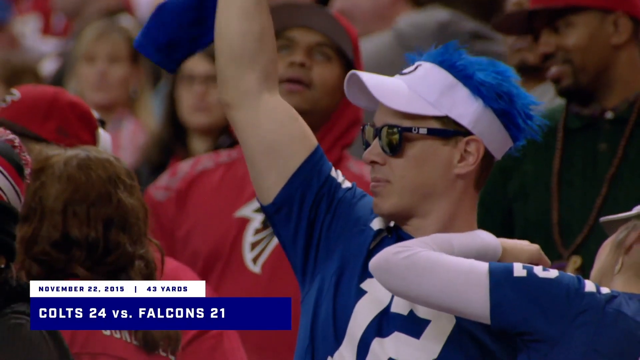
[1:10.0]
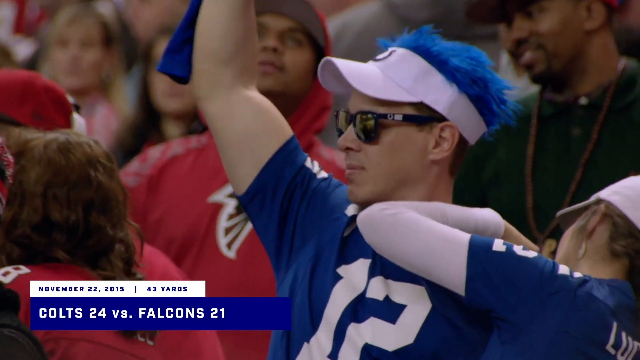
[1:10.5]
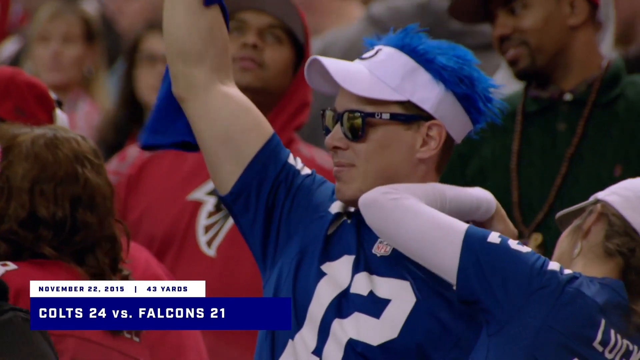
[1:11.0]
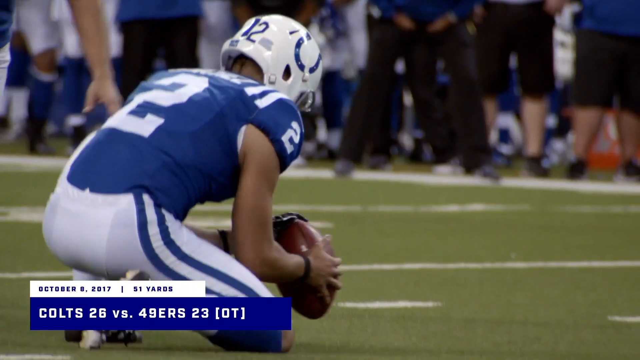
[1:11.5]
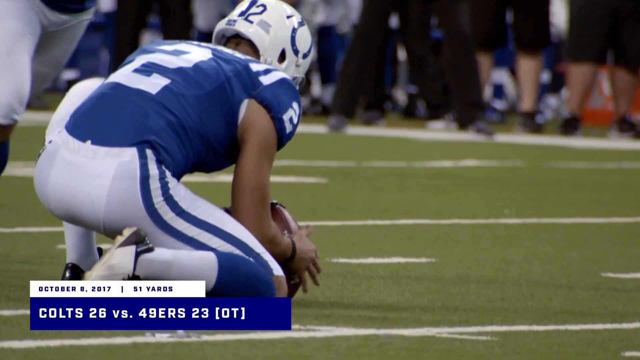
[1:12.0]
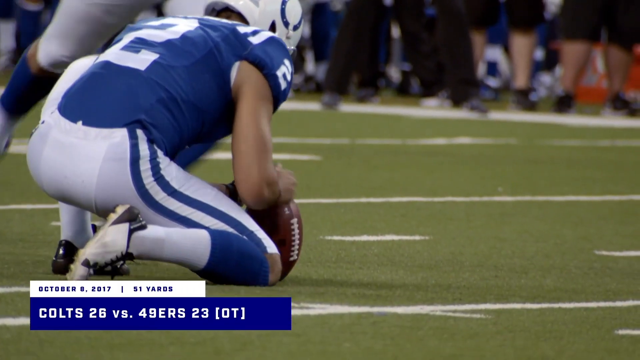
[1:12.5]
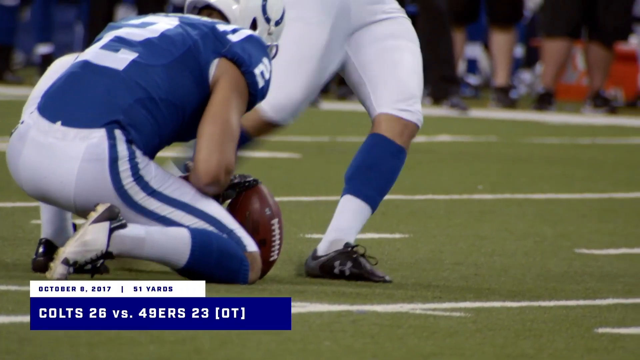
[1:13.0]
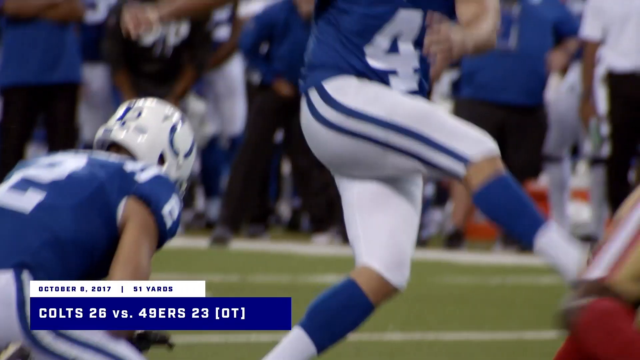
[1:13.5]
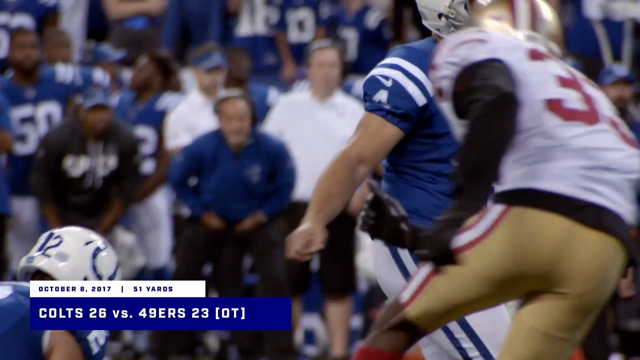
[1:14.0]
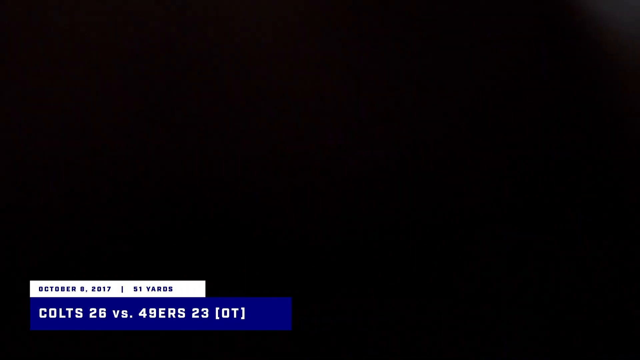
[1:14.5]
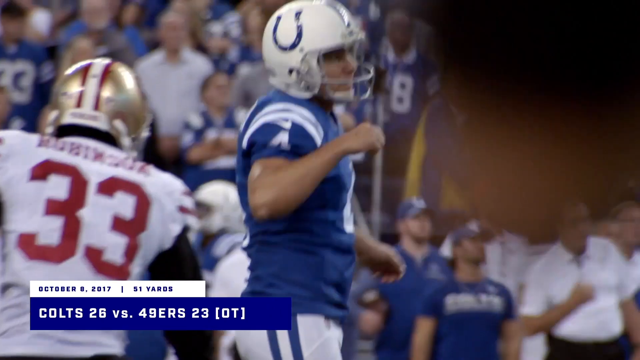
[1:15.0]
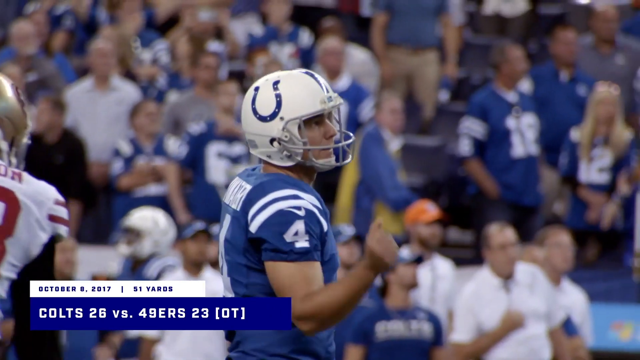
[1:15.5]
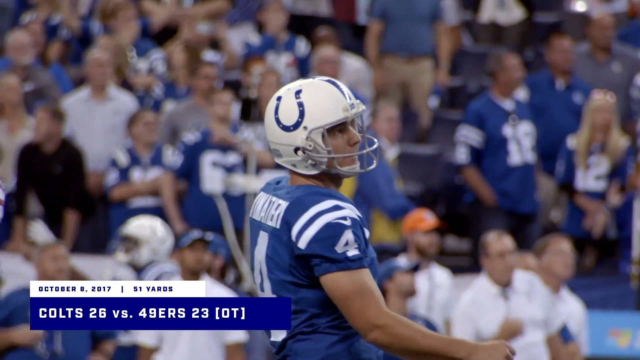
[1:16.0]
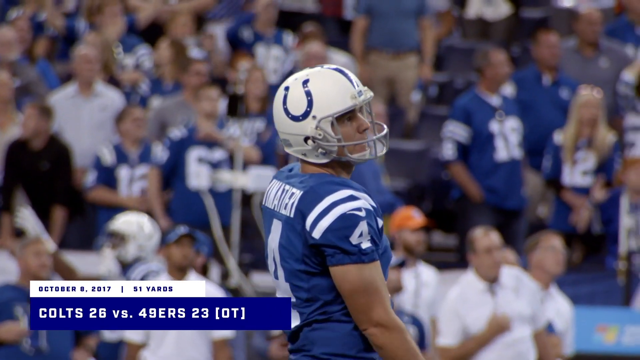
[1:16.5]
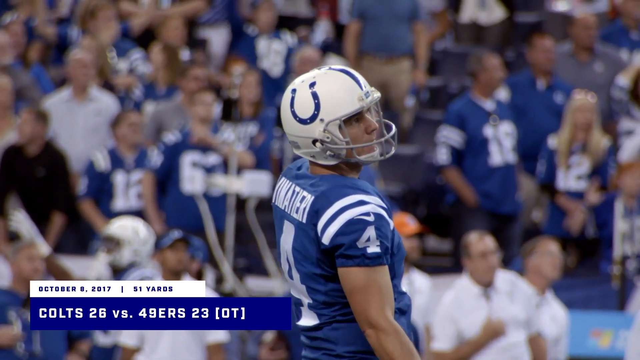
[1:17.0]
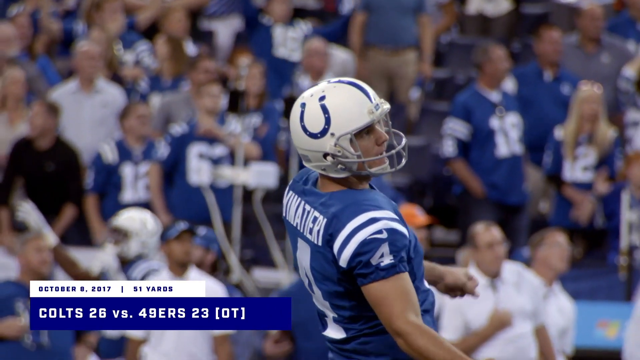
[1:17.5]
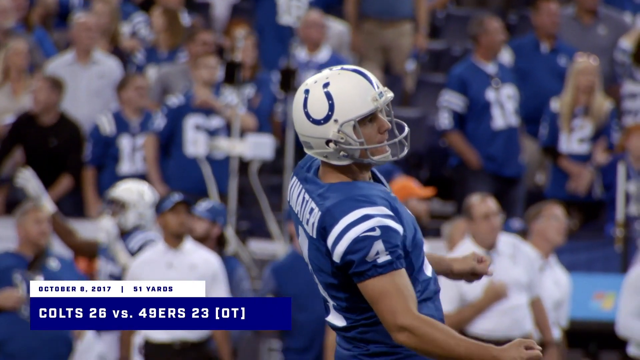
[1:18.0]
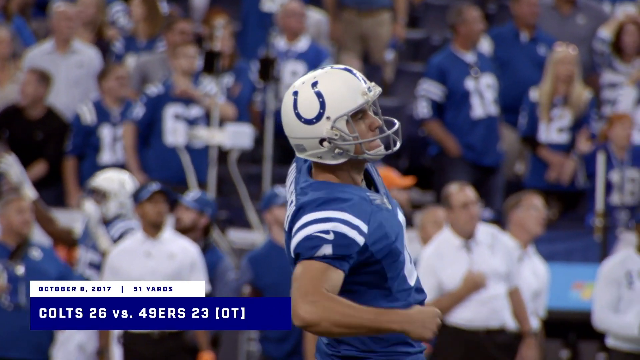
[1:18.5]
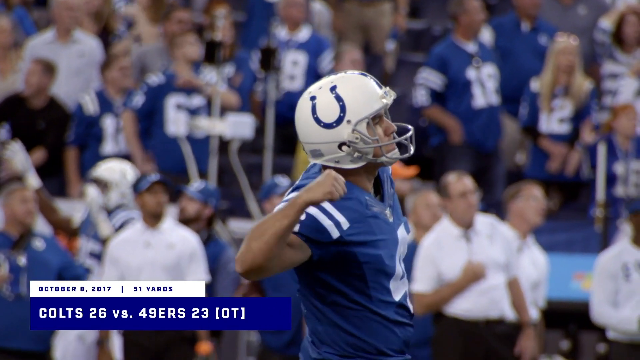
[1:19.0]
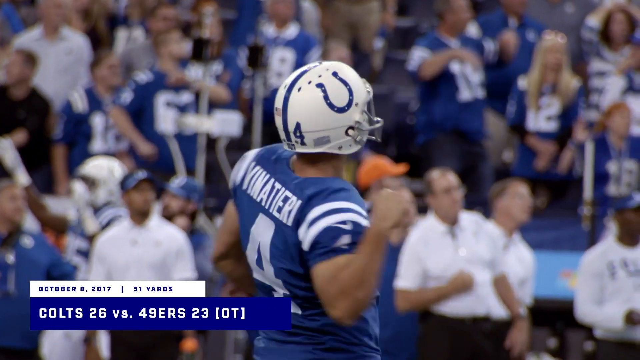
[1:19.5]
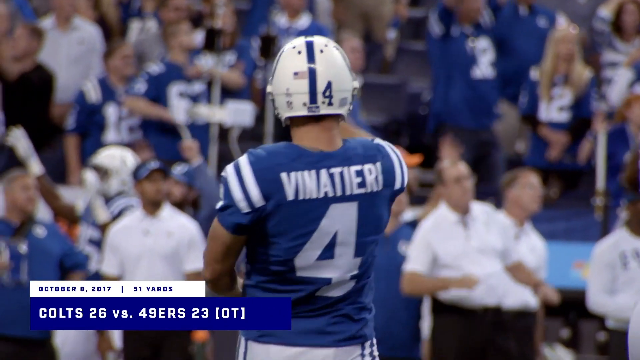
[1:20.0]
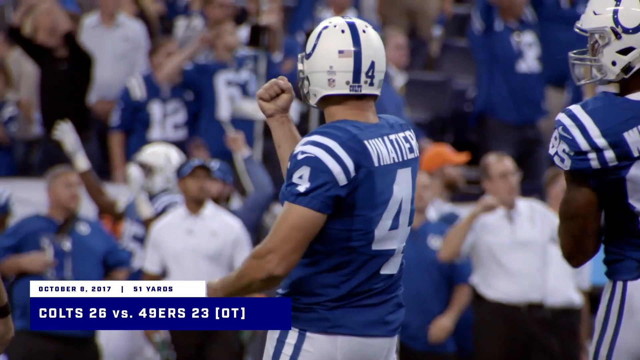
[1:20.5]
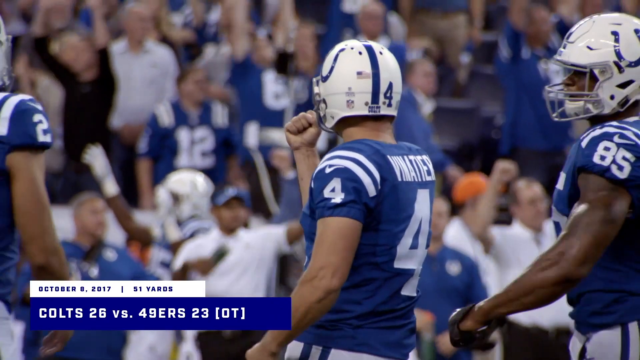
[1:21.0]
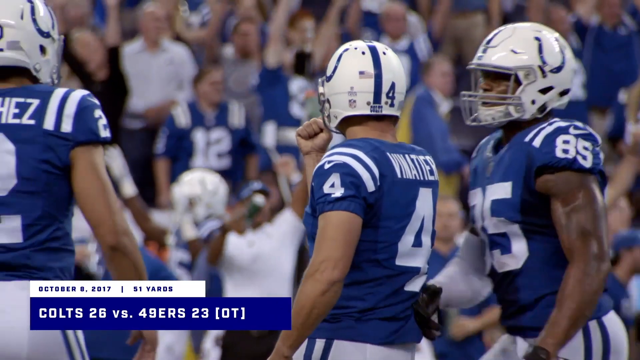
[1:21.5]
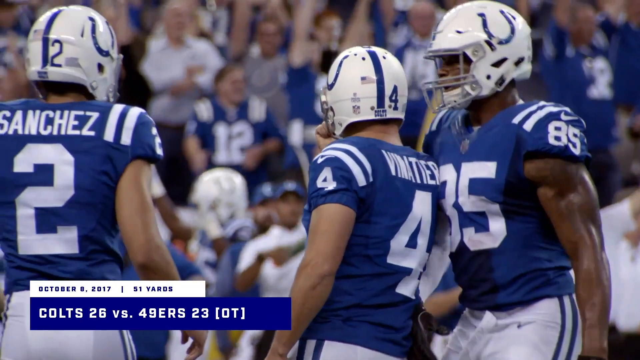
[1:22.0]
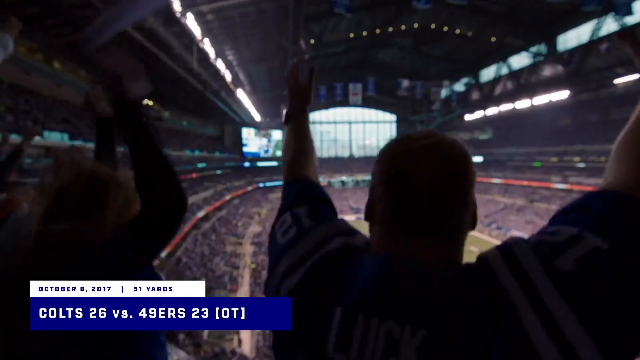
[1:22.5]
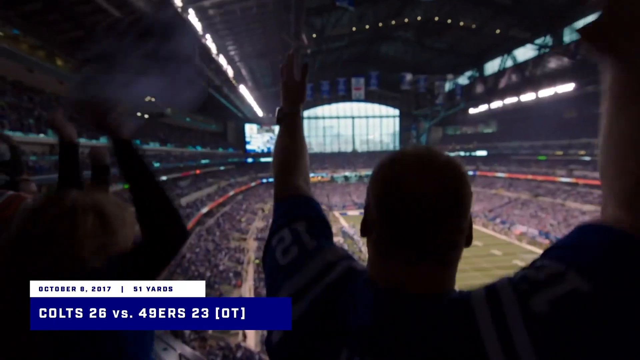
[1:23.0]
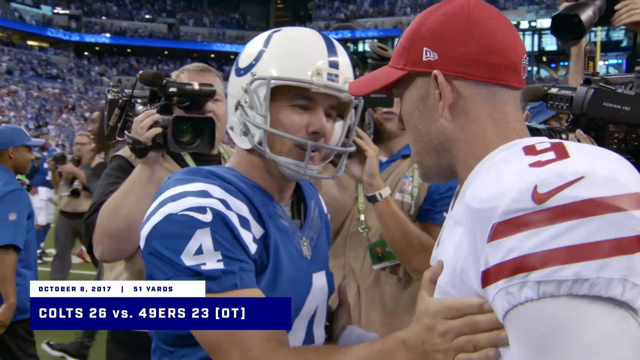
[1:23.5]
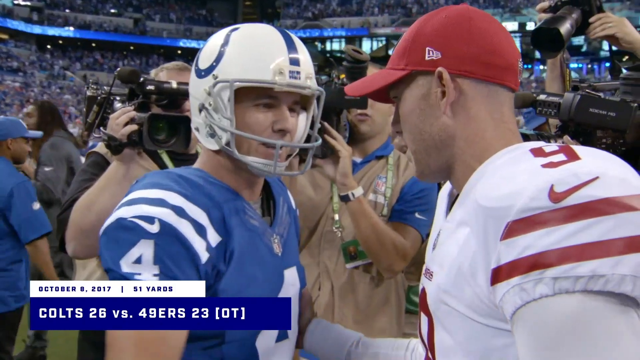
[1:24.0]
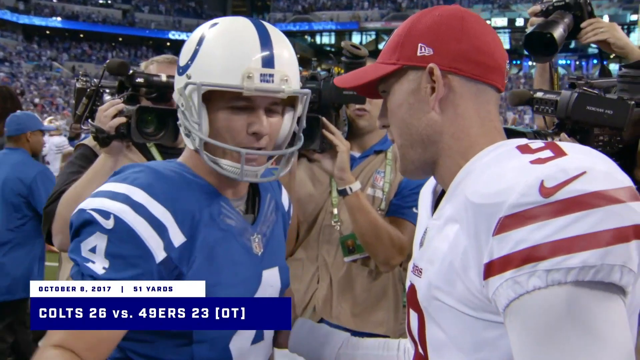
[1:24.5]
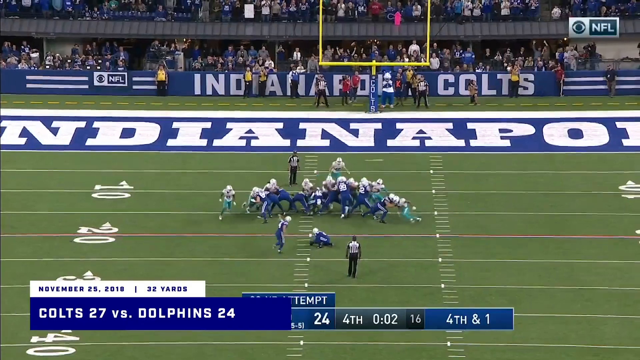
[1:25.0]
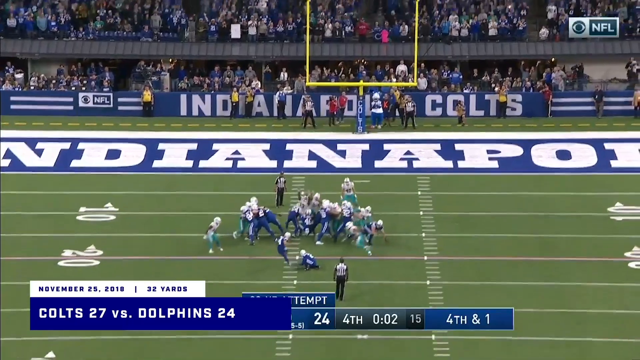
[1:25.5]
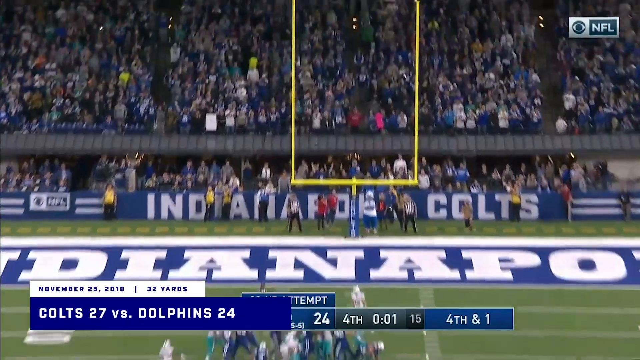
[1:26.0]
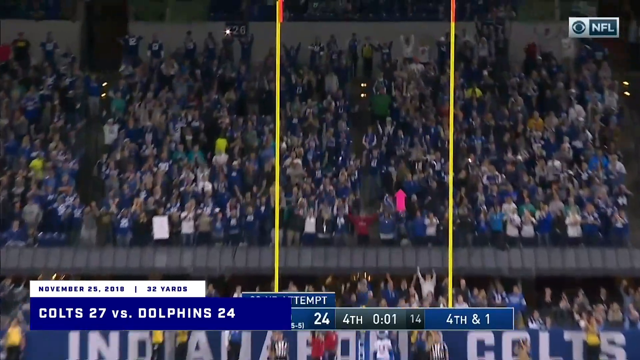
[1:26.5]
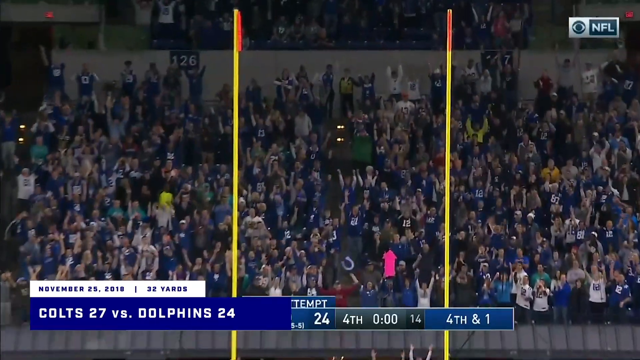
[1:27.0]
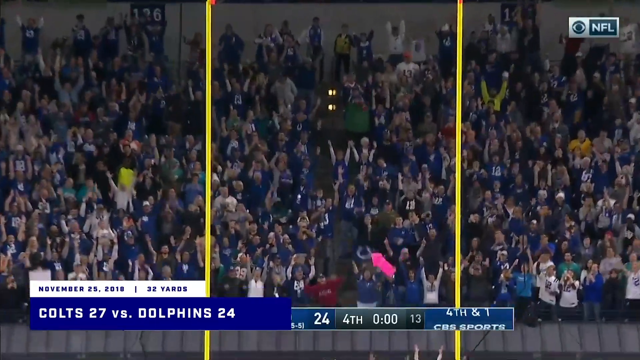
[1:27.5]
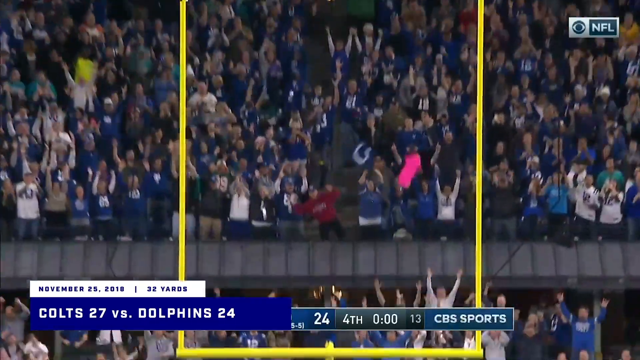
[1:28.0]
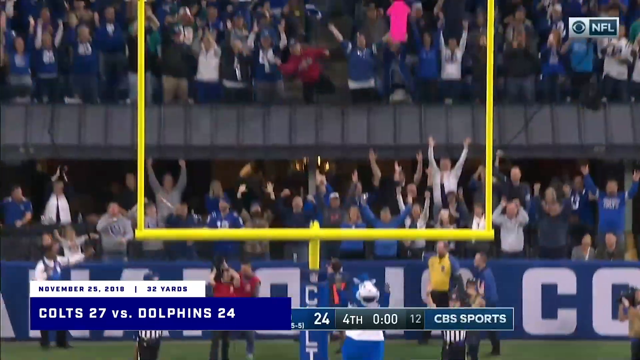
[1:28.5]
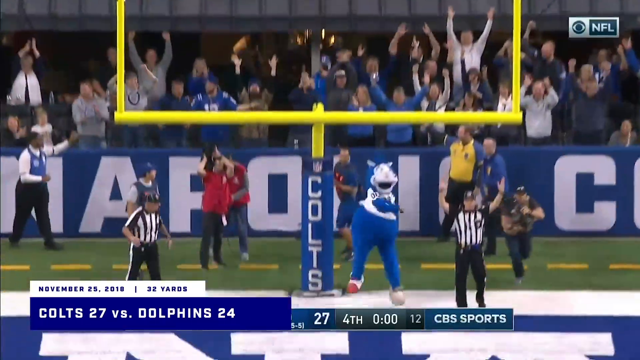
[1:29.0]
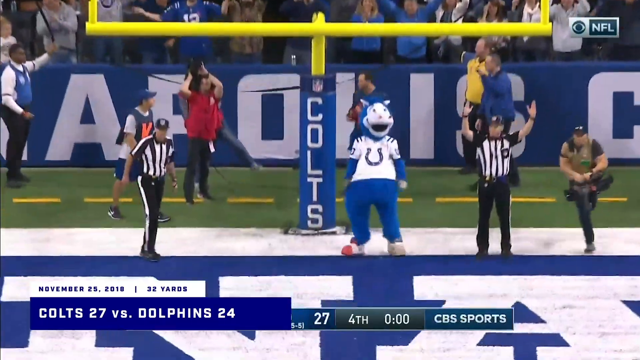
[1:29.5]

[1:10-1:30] Fans are shown, then a man holds the ball and the Colts kicker kicks. The field goal itself is not visible; instead a front view of the kicker shows him celebrating with a little fist bump. More fans appear. This game is the Colts versus the 49ers, 26 to 23 in overtime, on a 51-yard field goal, with the date 2017. Next comes the Colts versus the Dolphins, with the score 27 to 24 in the fourth quarter and very little time left as the clock runs down. A field goal kick is shown from a different angle, more of an overhead view of the goalpost, and a mascot is under the goalpost, dancing.